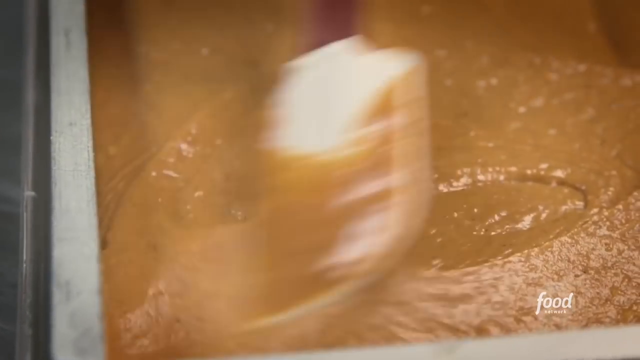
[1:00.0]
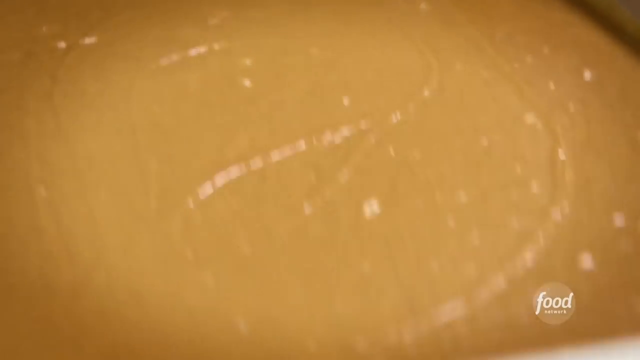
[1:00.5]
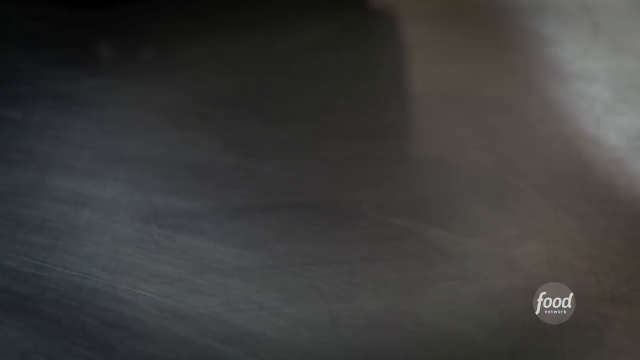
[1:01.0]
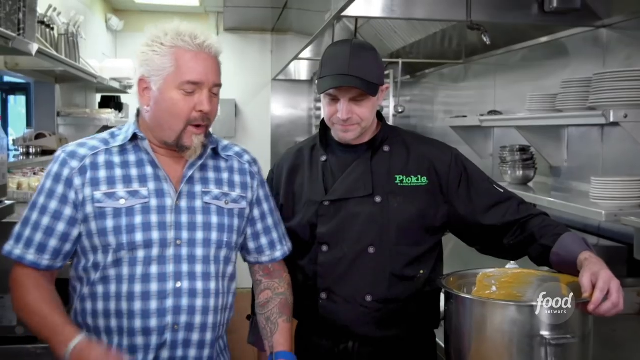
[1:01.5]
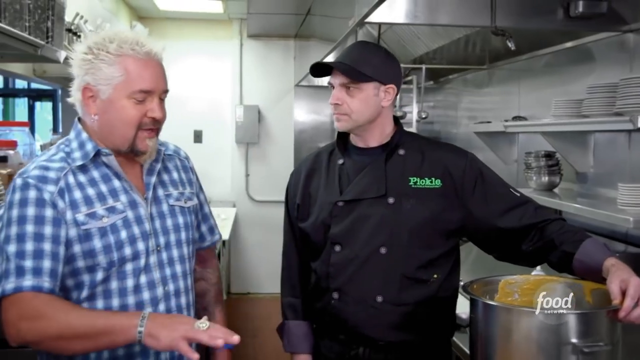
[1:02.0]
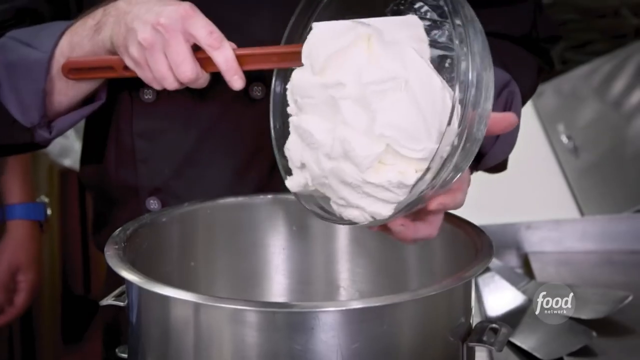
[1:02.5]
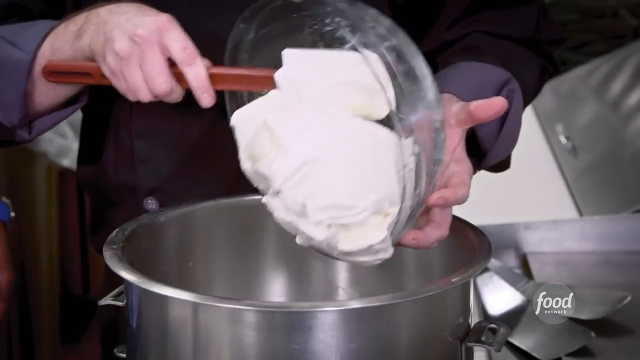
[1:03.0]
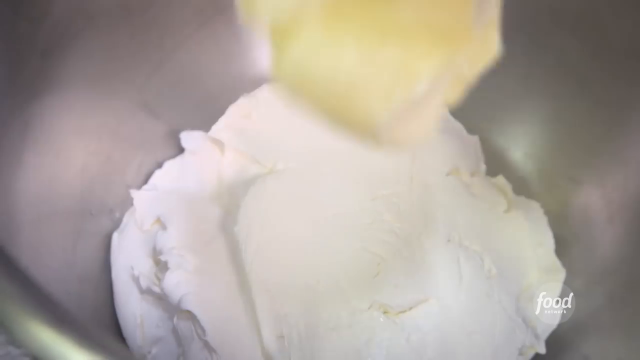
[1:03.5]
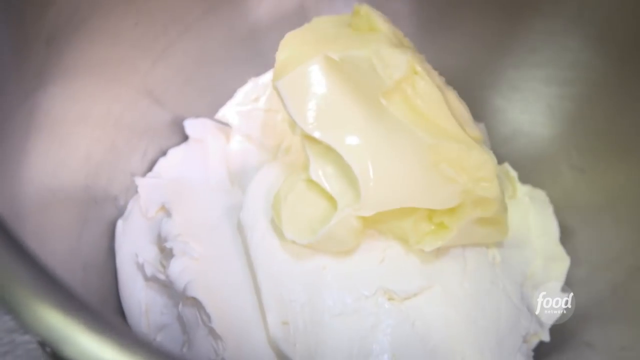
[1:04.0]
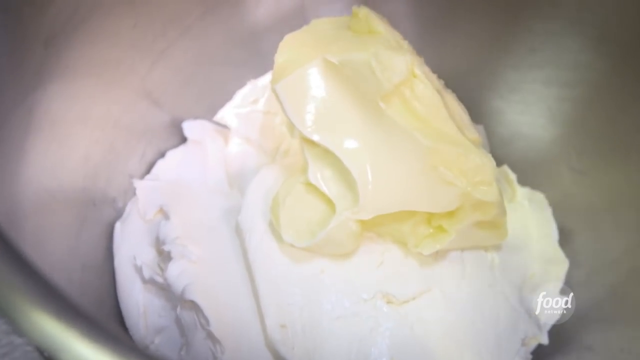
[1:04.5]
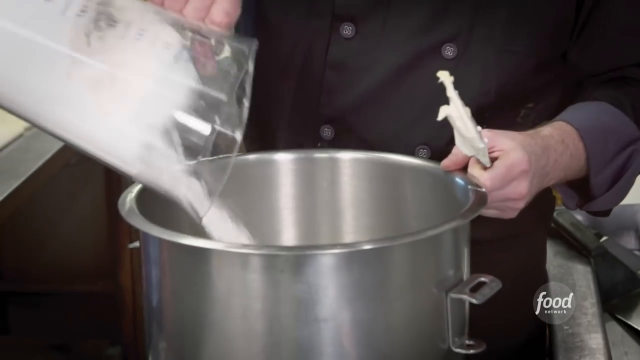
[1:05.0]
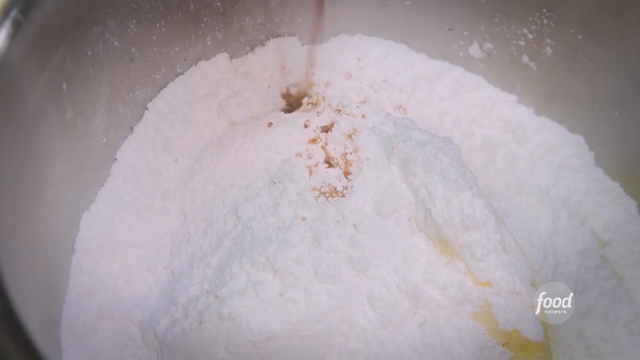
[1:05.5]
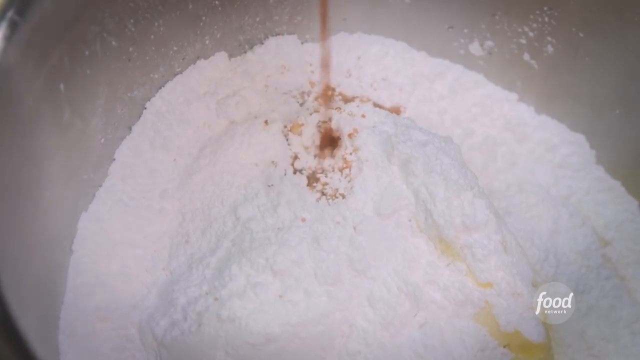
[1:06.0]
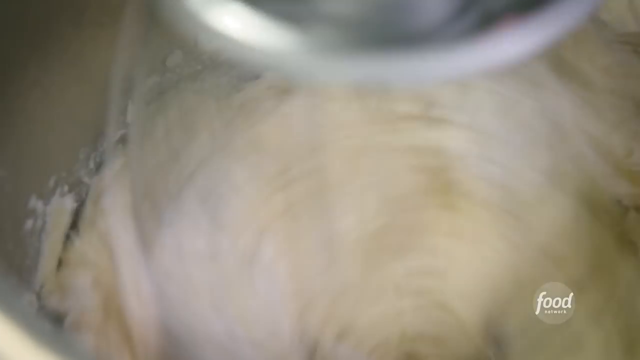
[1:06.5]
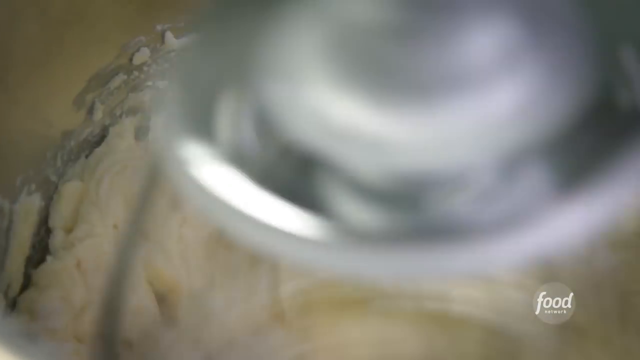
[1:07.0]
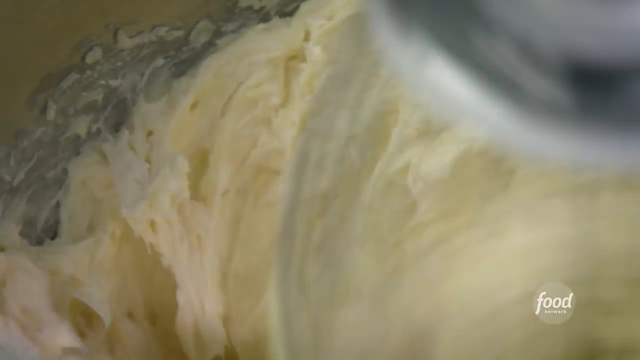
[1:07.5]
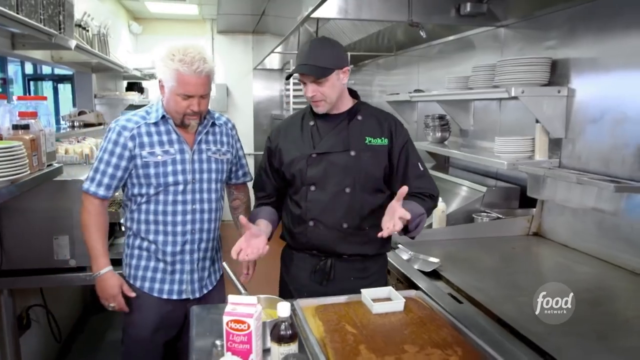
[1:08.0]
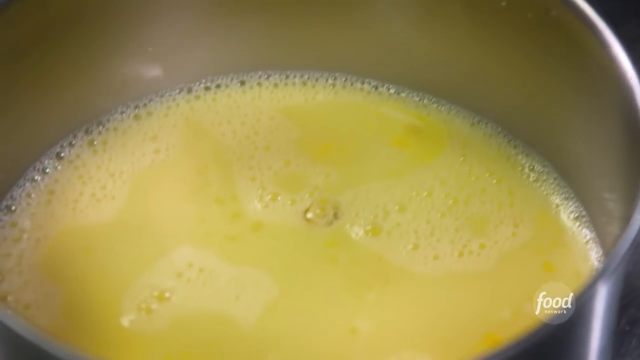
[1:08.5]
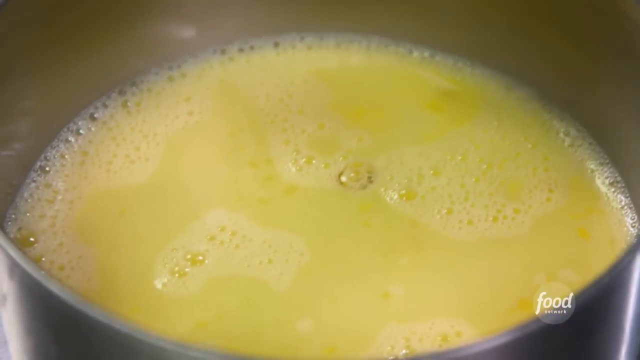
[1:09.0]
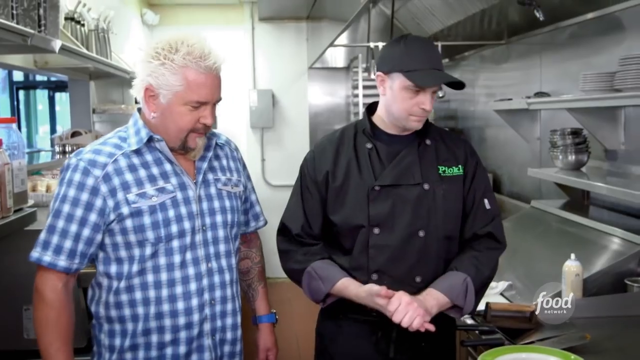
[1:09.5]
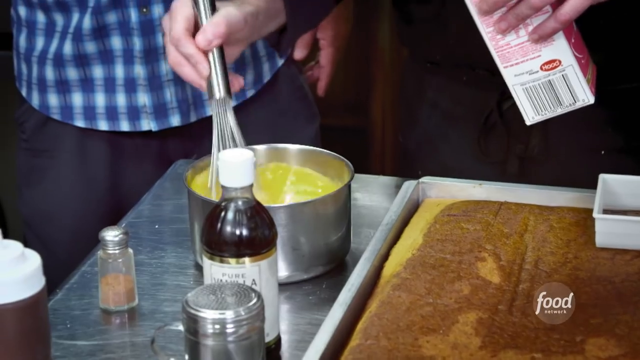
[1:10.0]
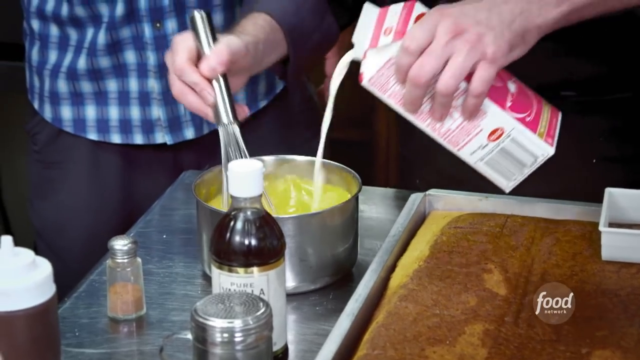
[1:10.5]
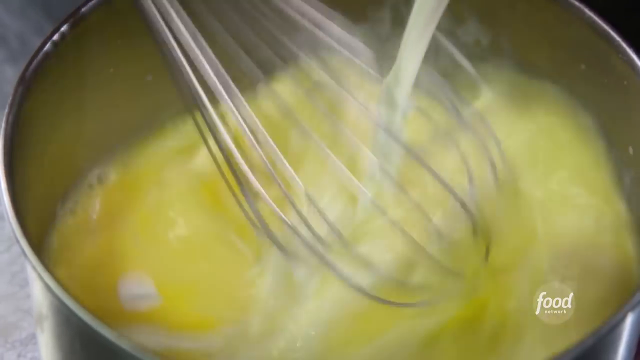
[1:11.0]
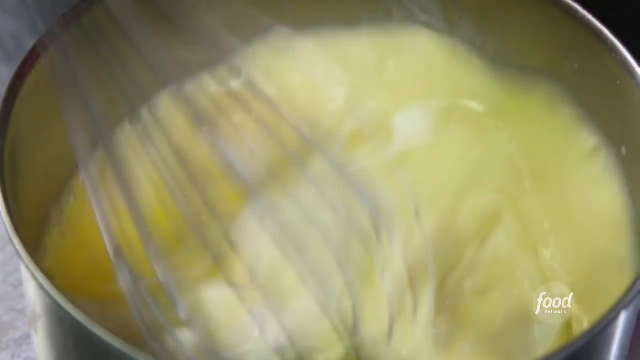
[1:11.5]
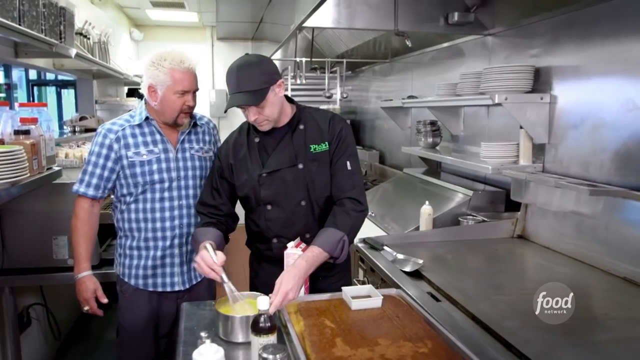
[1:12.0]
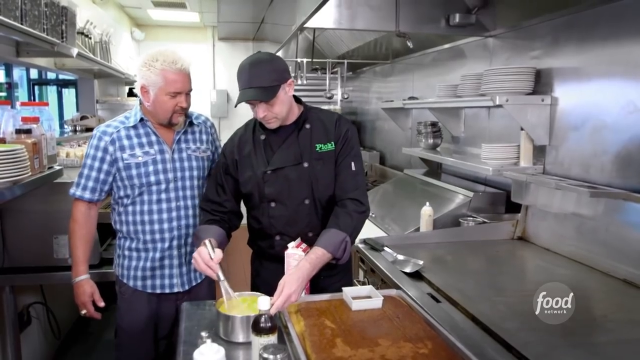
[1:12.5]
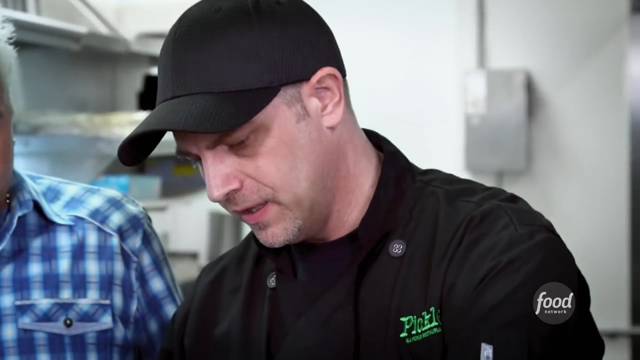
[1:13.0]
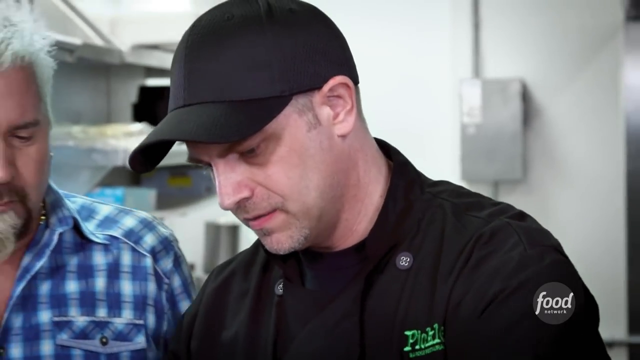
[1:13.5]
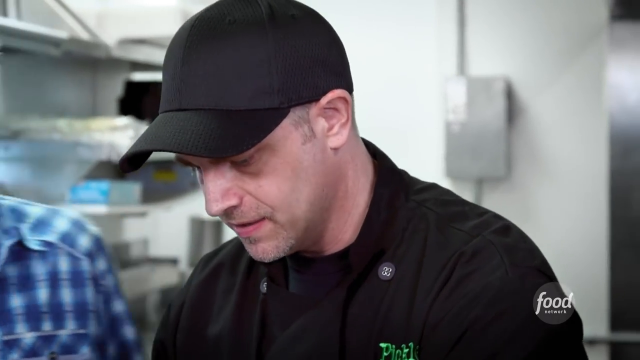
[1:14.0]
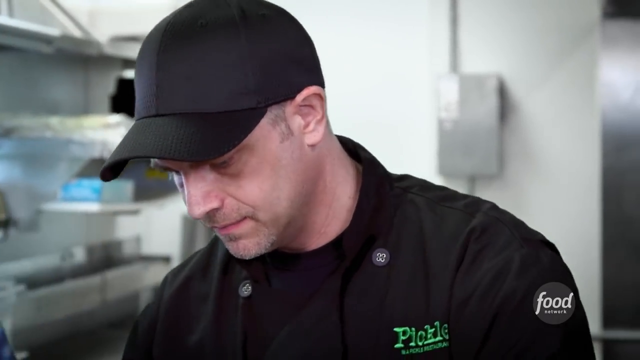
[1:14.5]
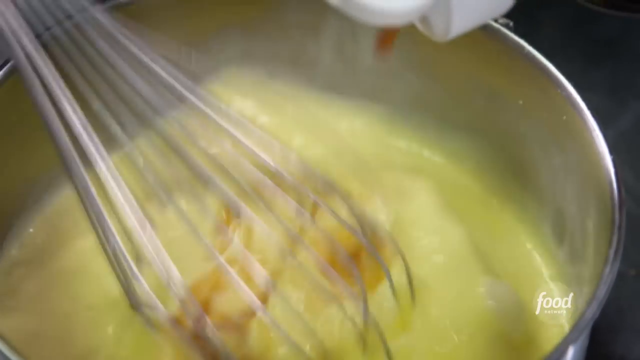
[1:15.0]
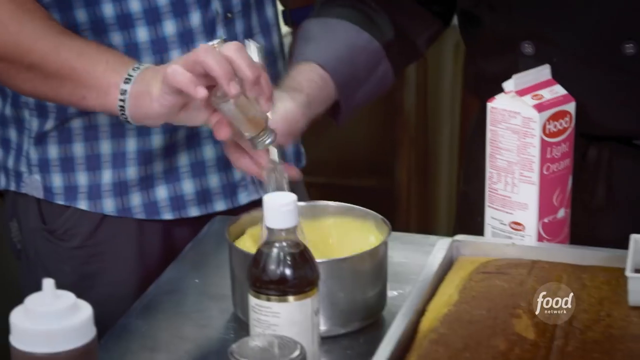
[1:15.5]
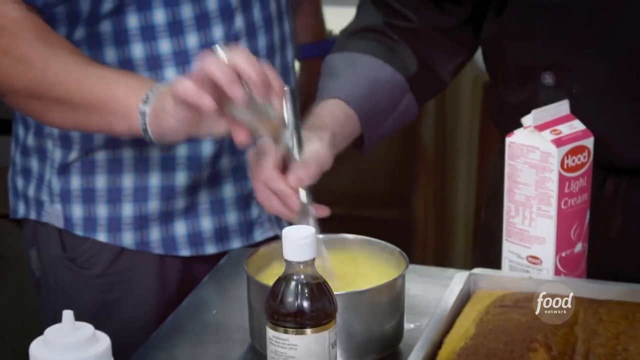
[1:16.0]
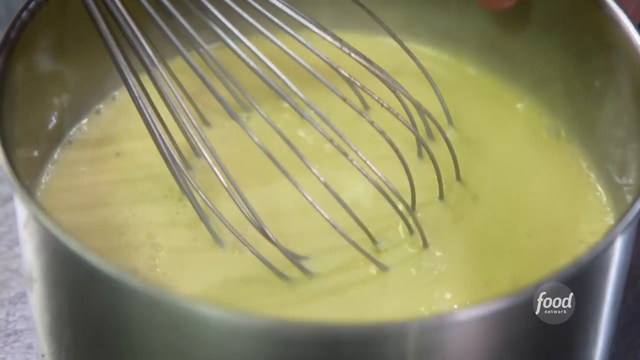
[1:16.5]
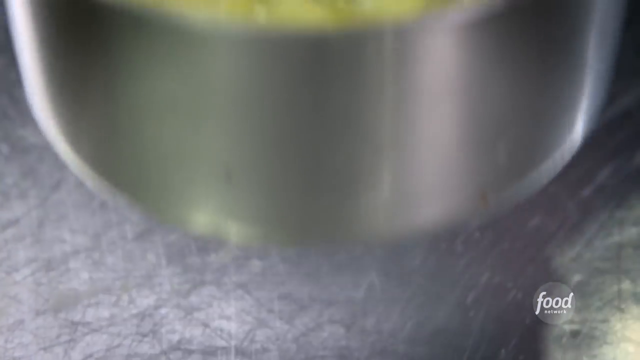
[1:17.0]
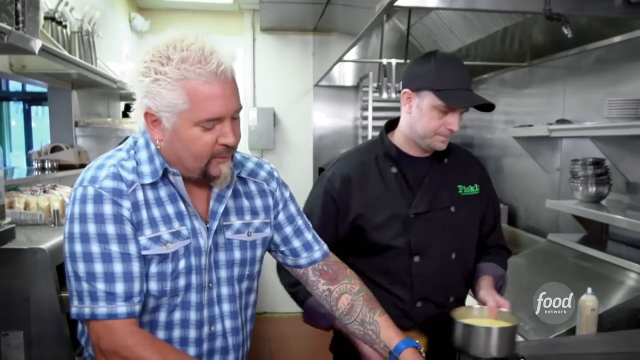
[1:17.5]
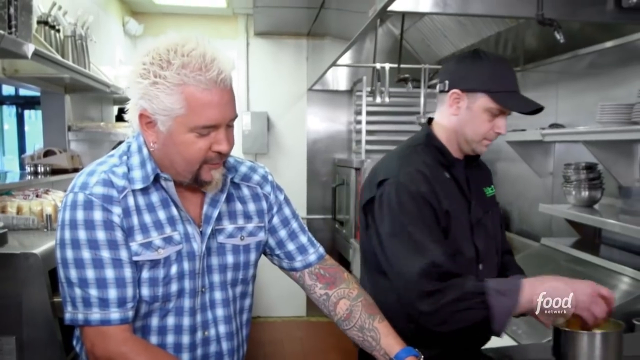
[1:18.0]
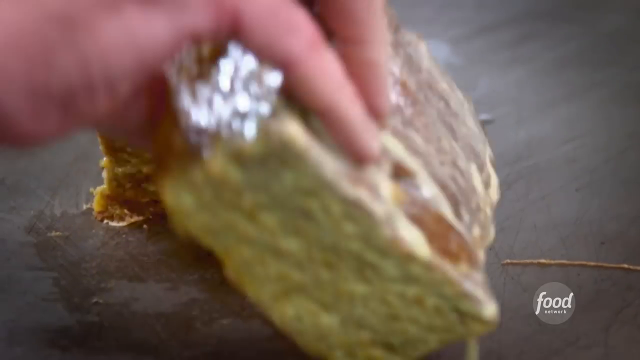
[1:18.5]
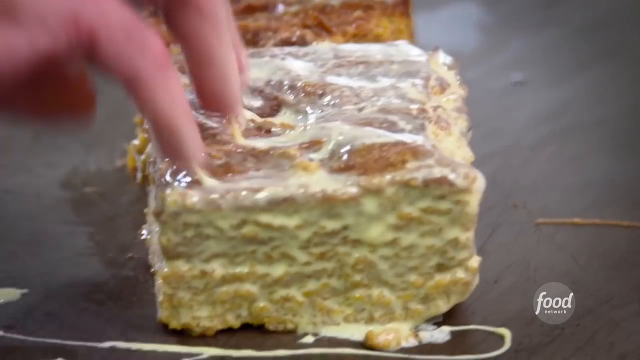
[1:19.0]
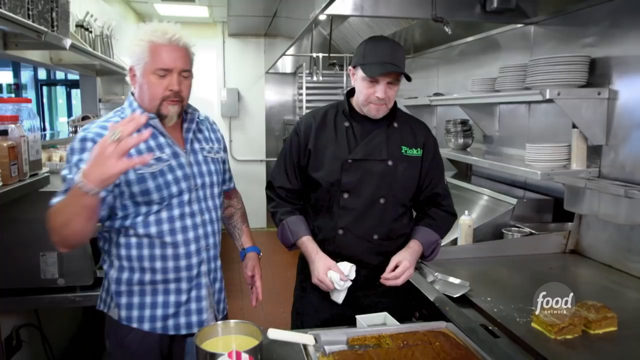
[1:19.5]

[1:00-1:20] The batter is smoothed out in the pan until it is perfectly flat and symmetrical. Some kind of whipped filling goes into a mixer with a large amount of butter, and what looks like vanilla extract and cream are added. Egg is whisked with milk and vanilla extract. Cut pieces of the cake are dipped in butter or something similar and placed on a grill.